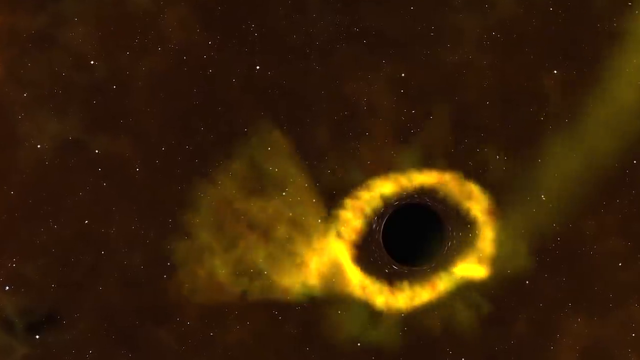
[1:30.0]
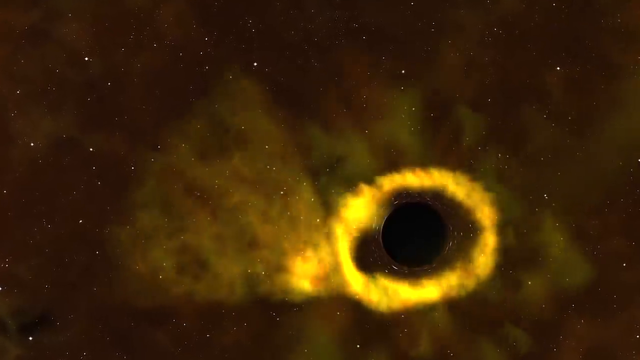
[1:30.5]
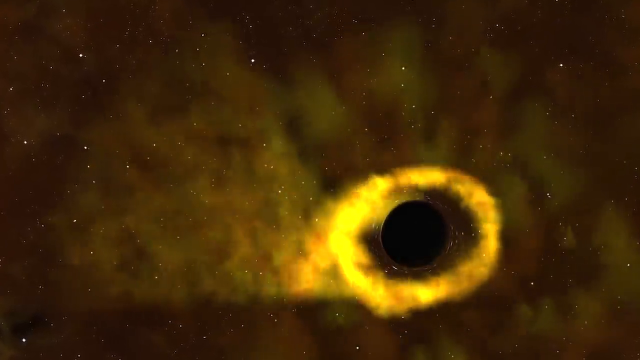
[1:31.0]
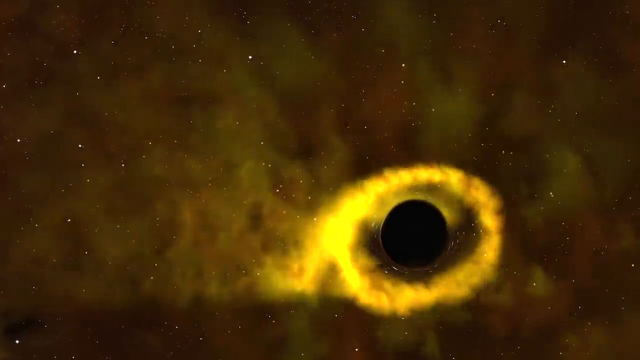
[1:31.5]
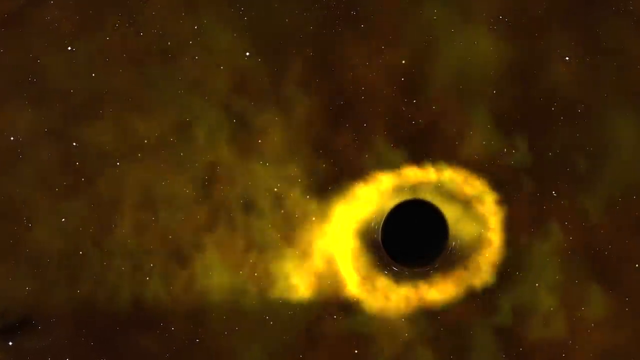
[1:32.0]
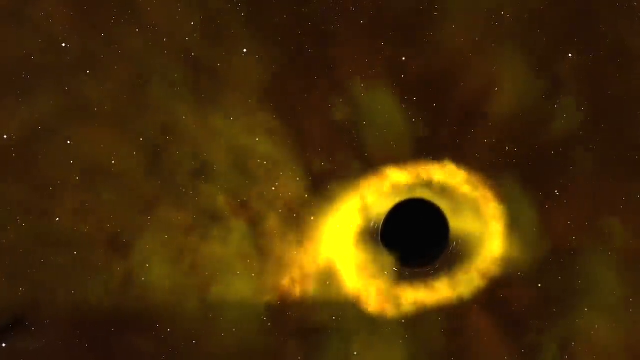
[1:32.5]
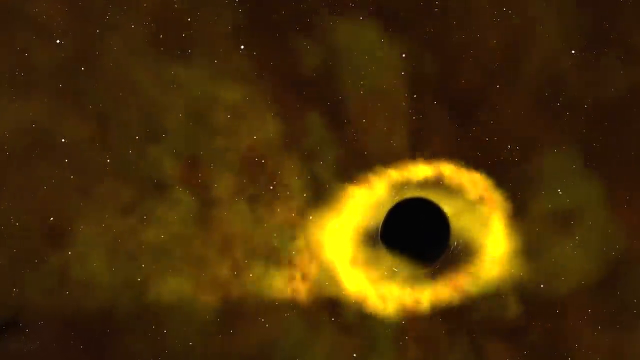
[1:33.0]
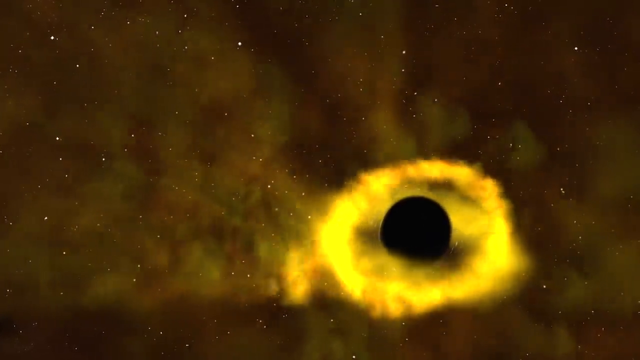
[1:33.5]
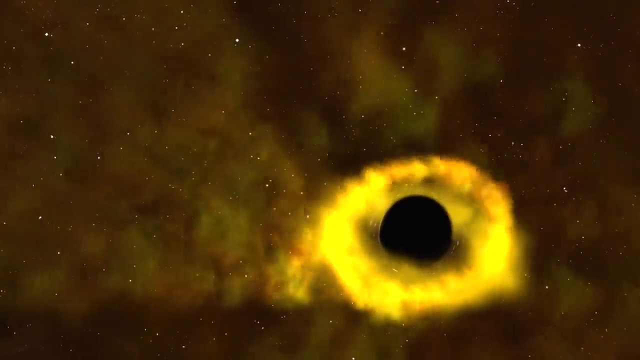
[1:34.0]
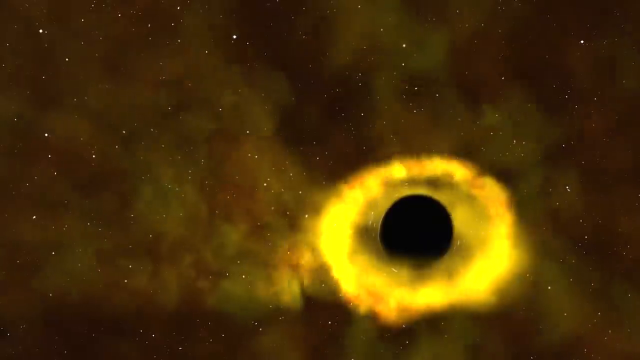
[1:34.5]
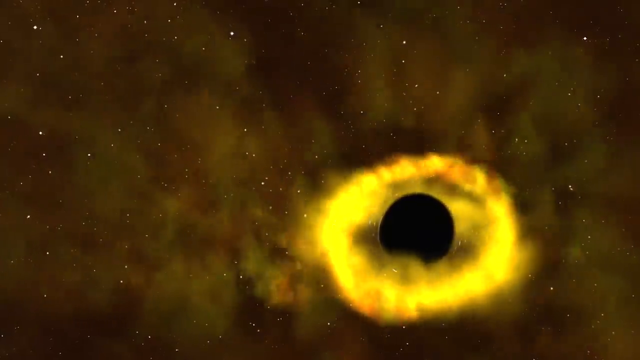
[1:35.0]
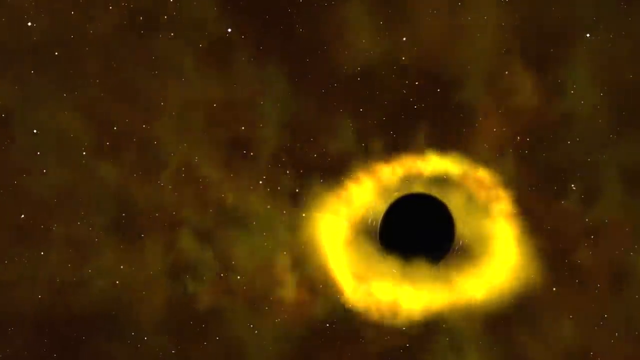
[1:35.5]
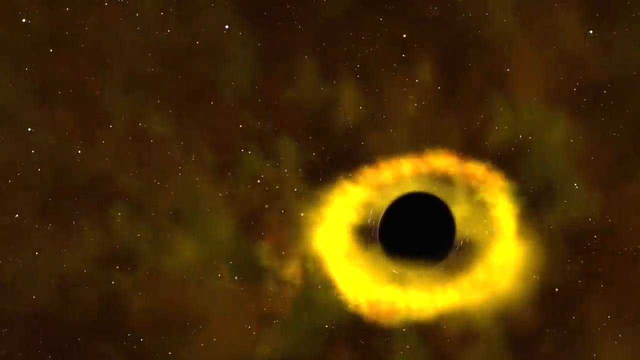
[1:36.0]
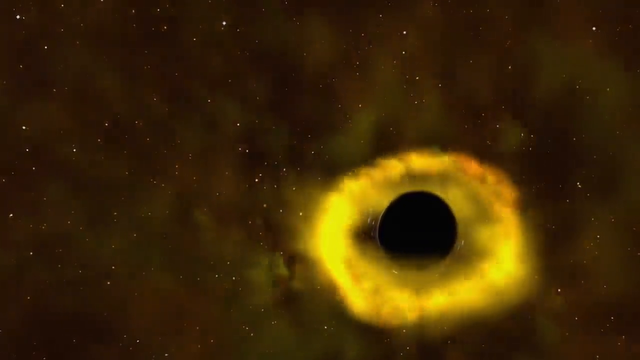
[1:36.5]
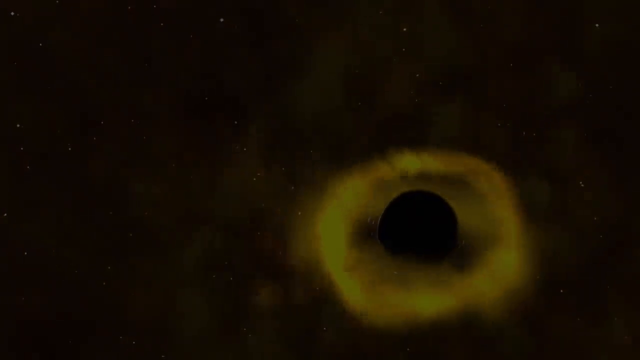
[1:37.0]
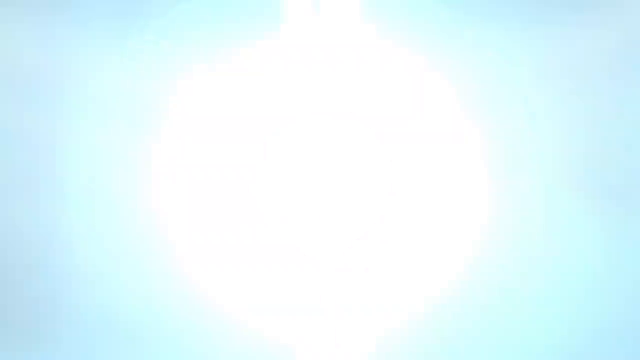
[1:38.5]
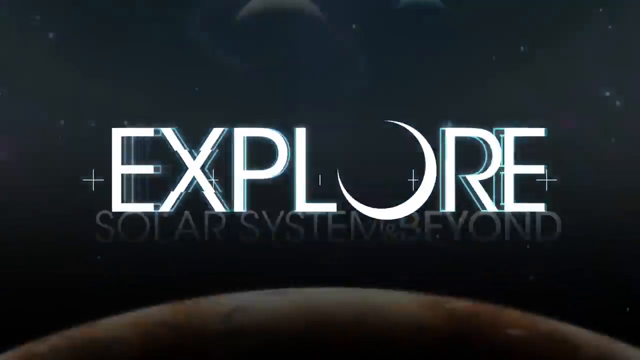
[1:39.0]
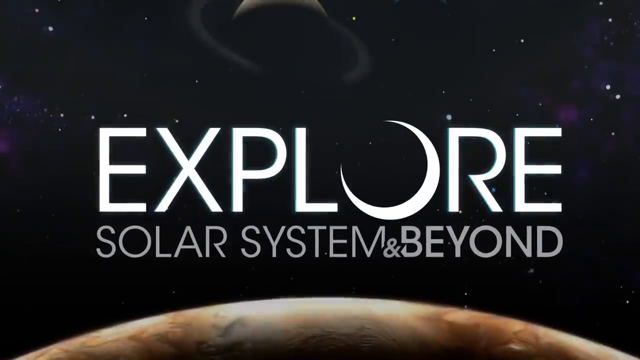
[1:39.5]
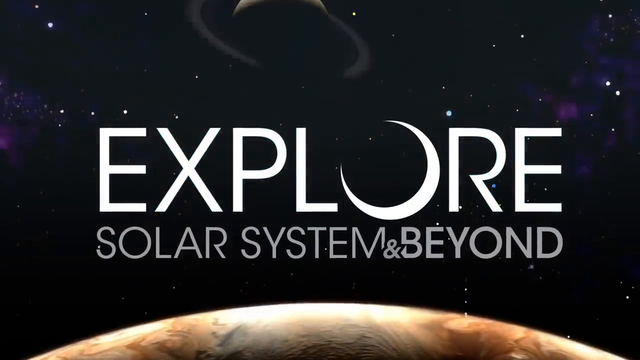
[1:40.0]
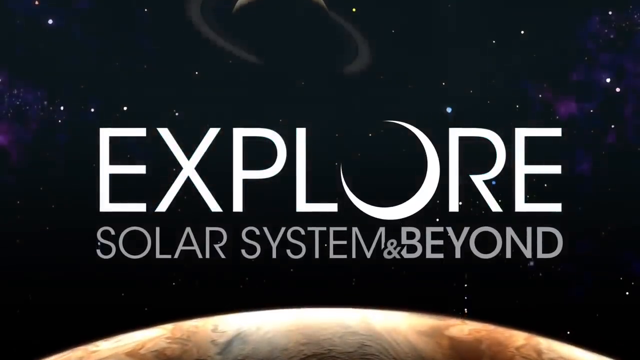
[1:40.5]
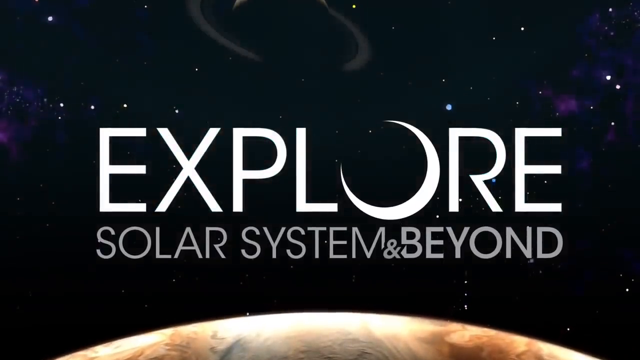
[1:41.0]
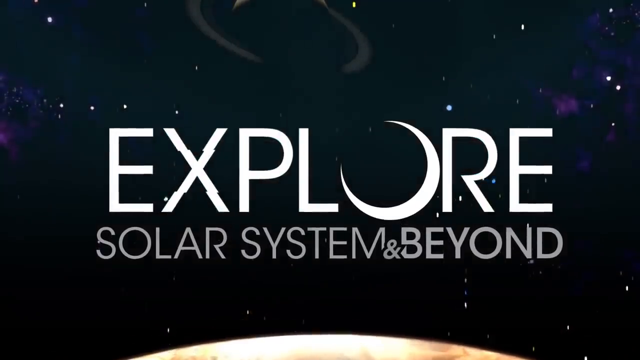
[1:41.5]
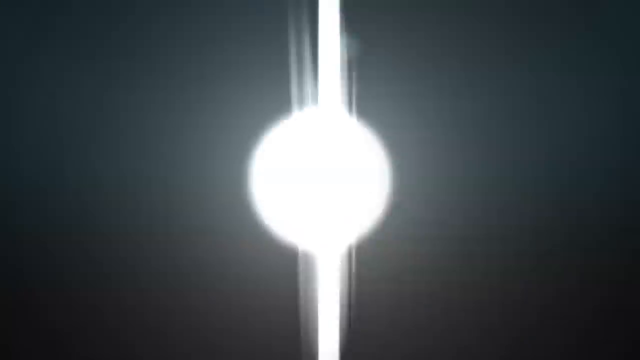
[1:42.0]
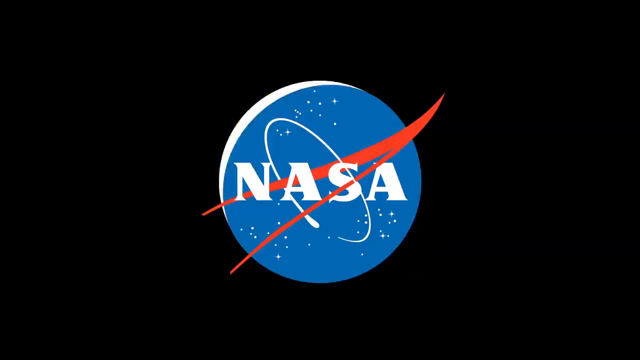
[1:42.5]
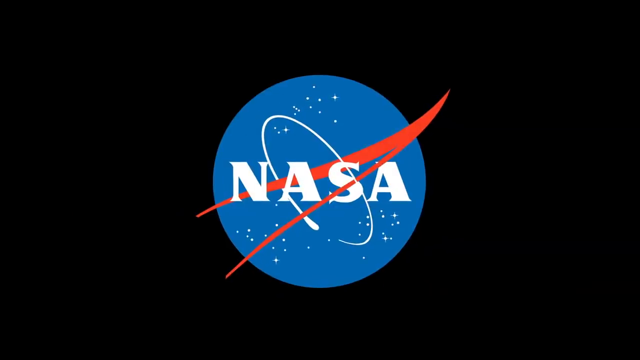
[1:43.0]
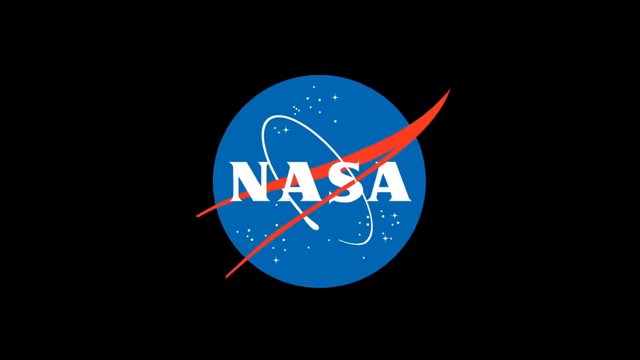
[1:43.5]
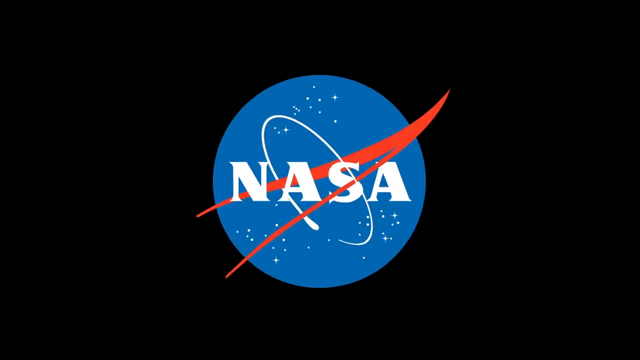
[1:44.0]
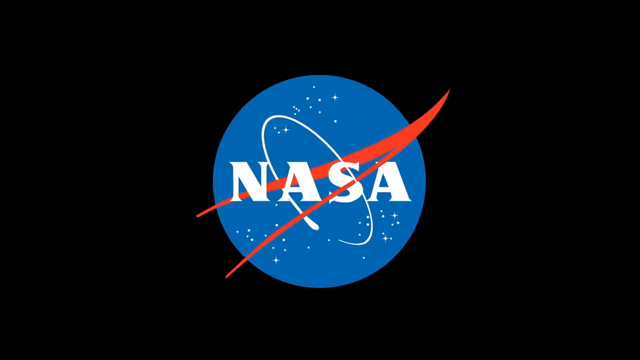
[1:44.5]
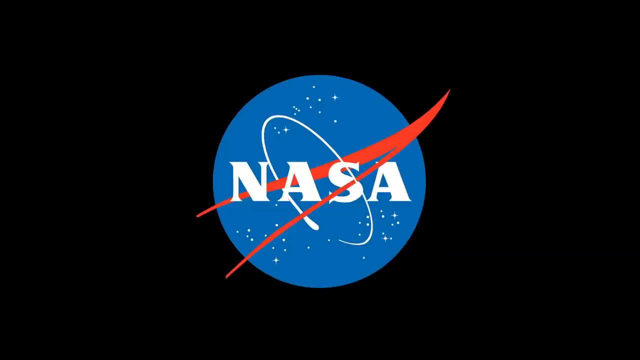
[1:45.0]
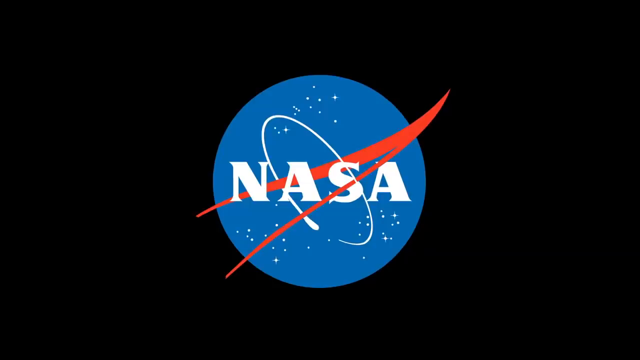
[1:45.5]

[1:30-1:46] A planet is shown, with things that may be electromagnetic or something like gas. The planet is shown to be really hot, and the colour is yellow. The video is from NASA and designed for NASA.